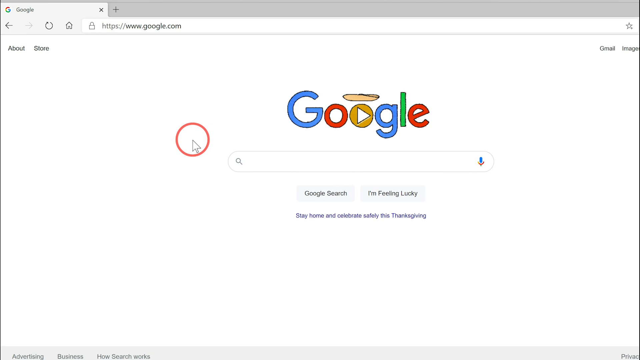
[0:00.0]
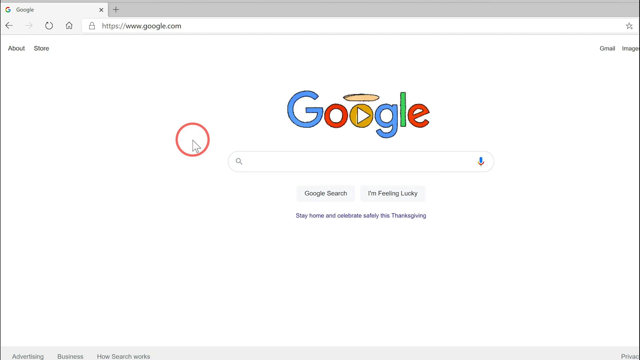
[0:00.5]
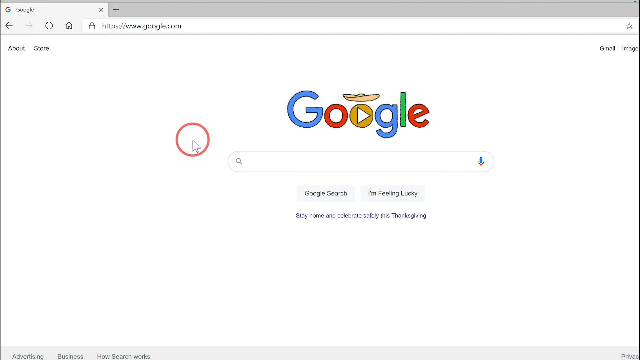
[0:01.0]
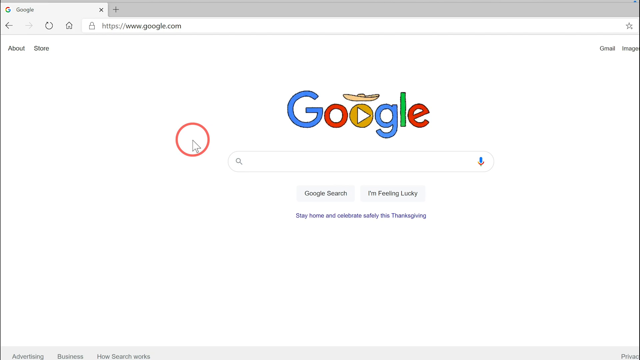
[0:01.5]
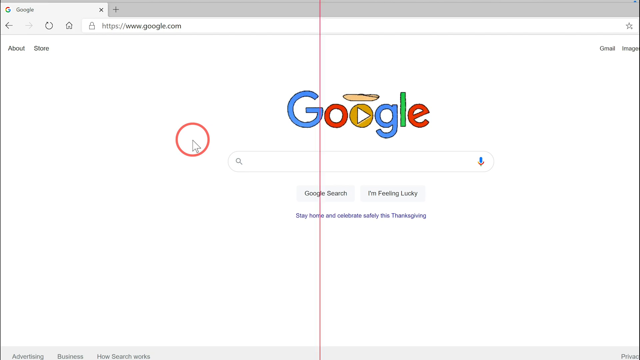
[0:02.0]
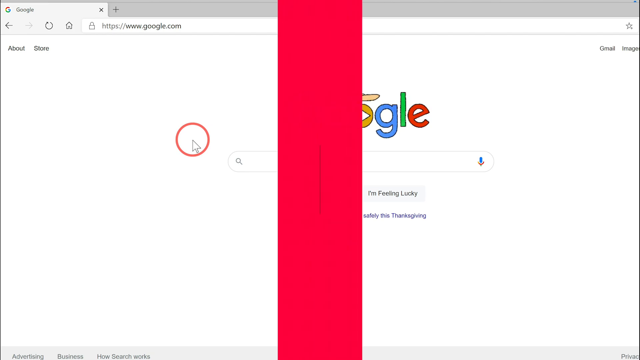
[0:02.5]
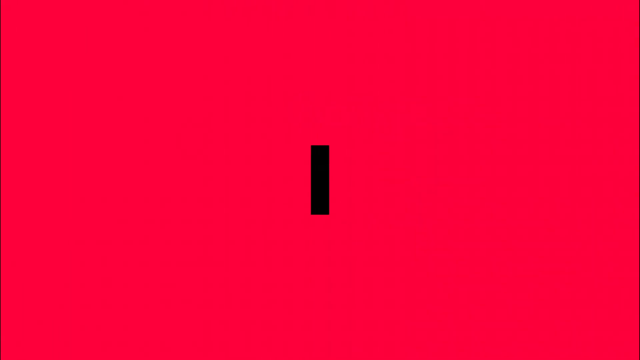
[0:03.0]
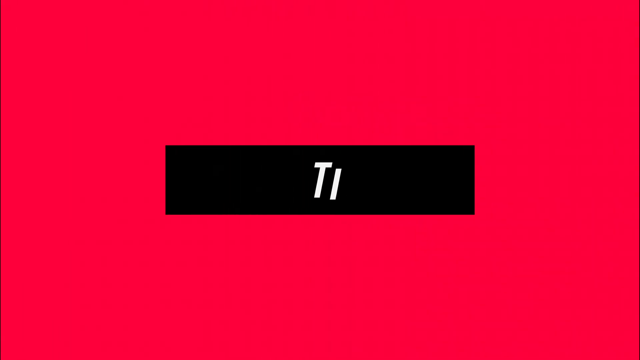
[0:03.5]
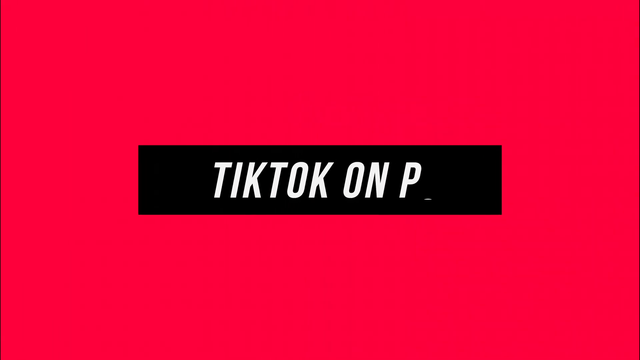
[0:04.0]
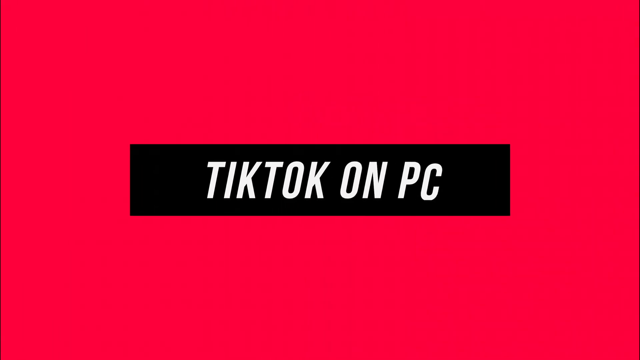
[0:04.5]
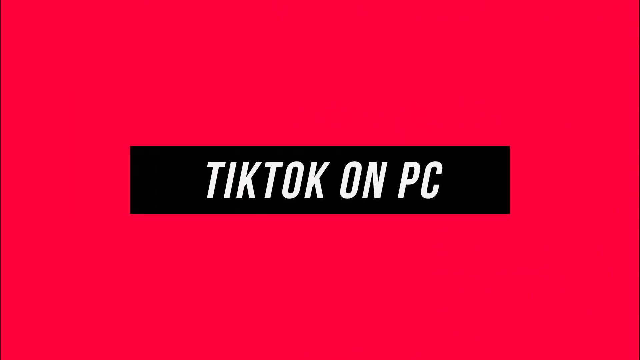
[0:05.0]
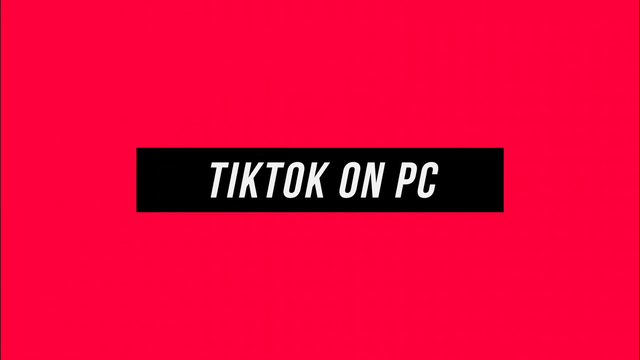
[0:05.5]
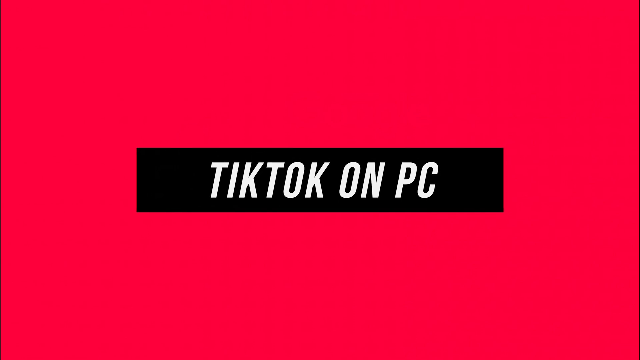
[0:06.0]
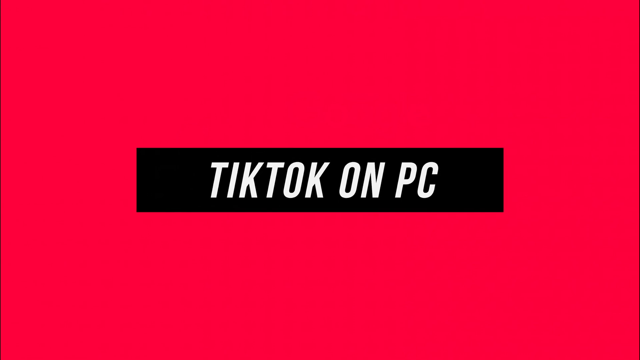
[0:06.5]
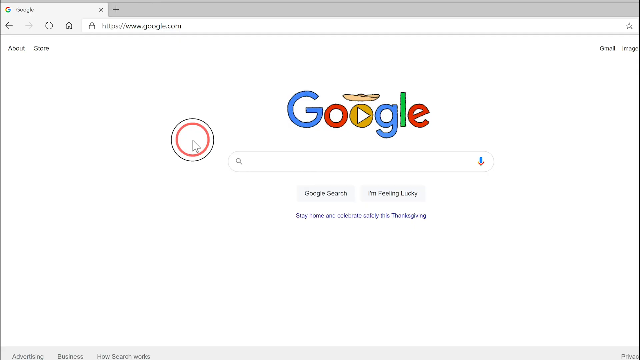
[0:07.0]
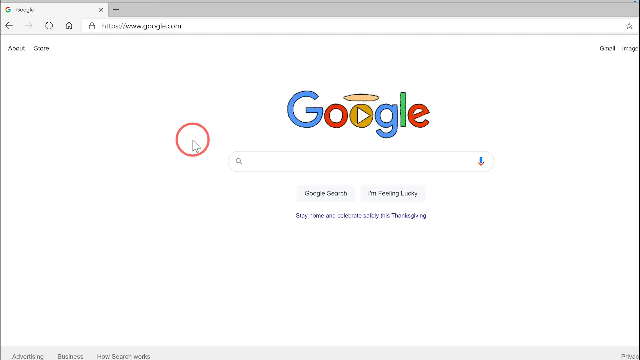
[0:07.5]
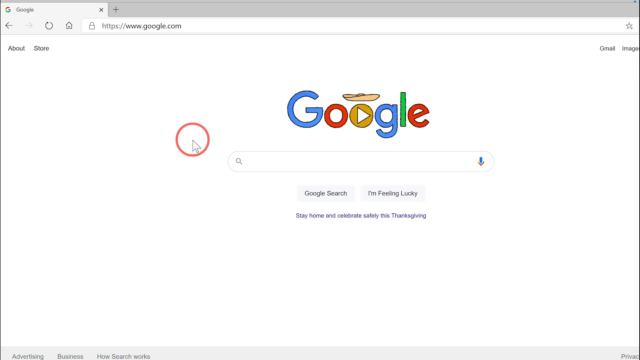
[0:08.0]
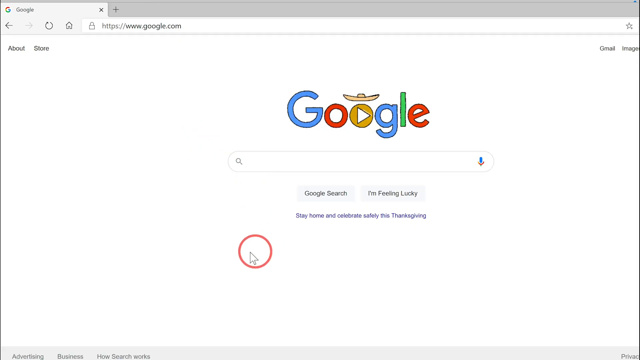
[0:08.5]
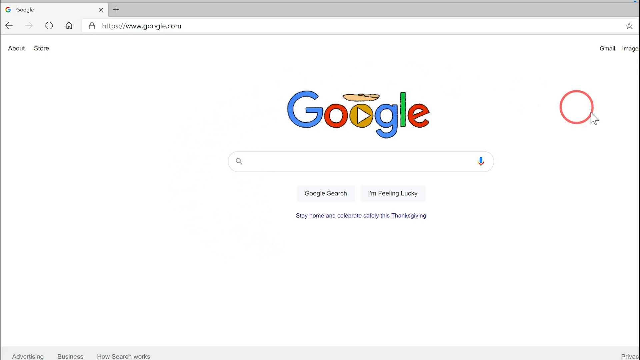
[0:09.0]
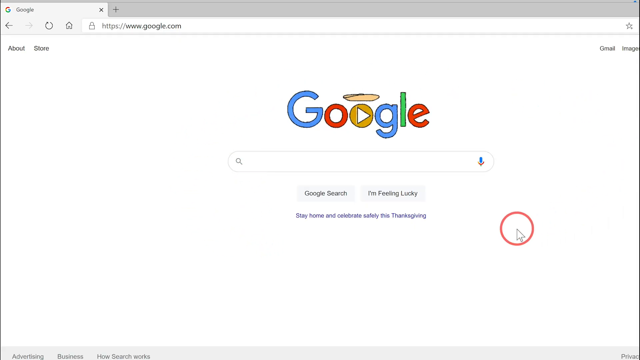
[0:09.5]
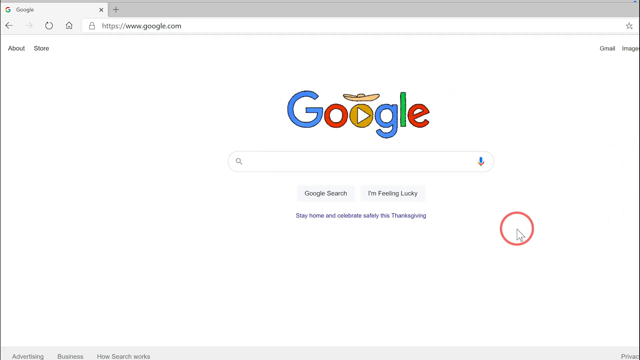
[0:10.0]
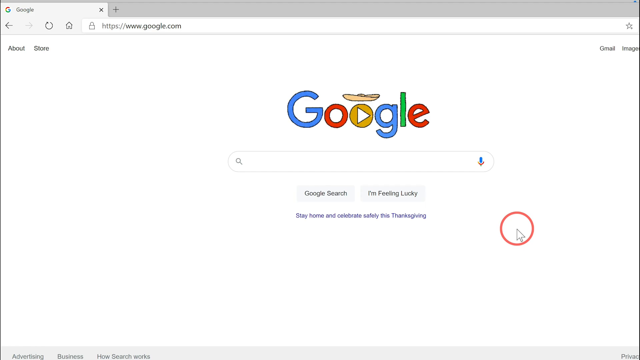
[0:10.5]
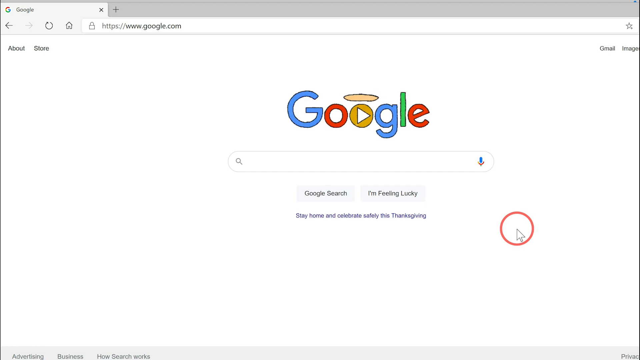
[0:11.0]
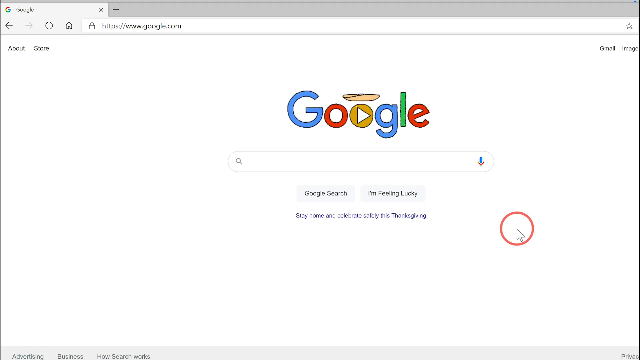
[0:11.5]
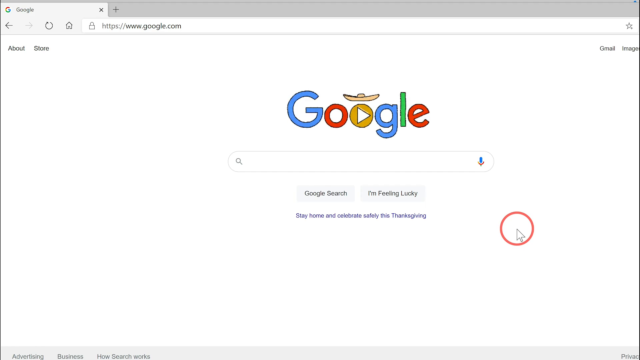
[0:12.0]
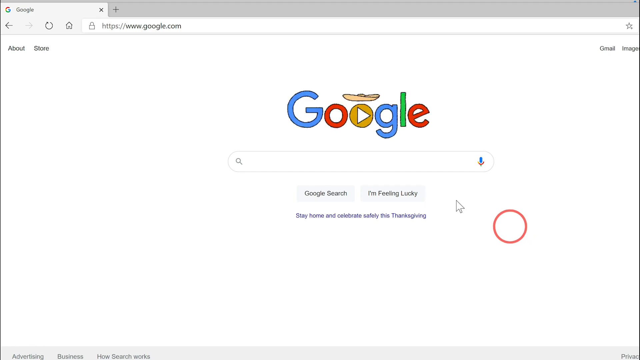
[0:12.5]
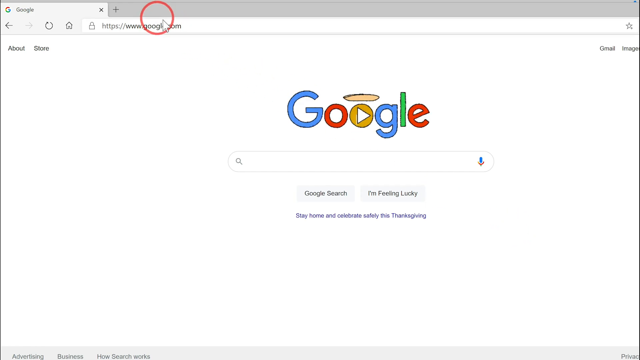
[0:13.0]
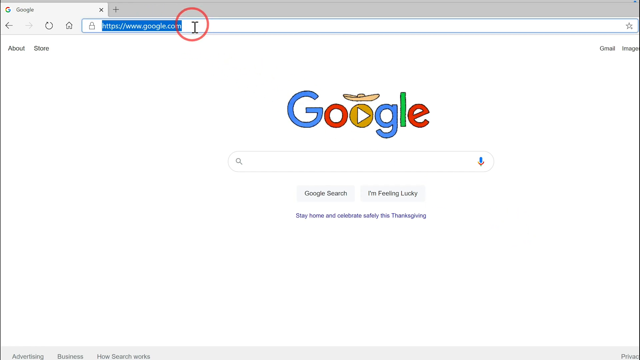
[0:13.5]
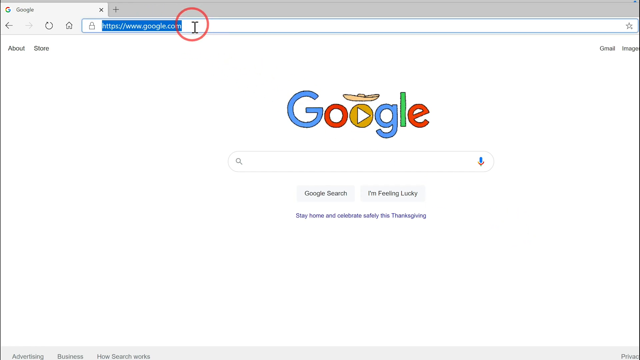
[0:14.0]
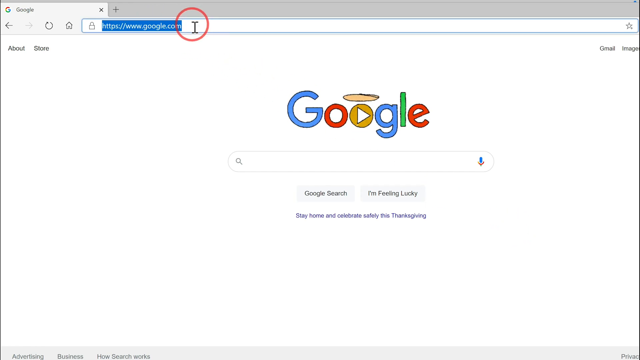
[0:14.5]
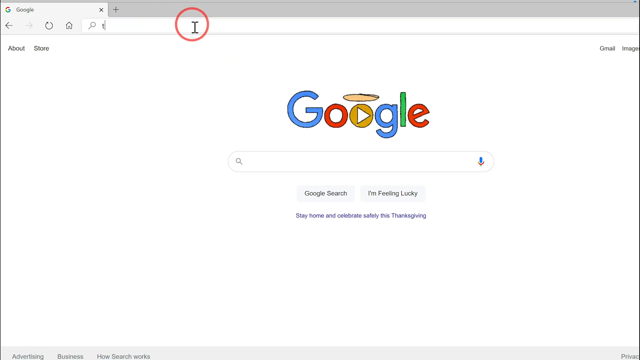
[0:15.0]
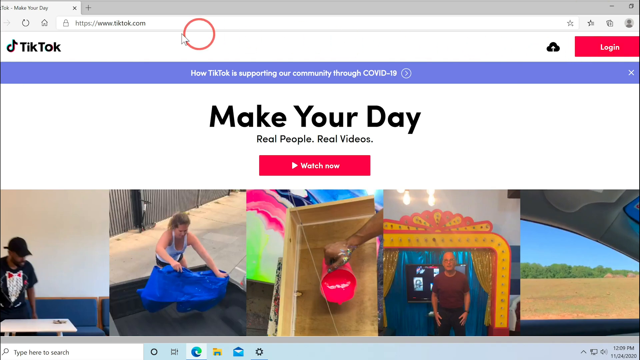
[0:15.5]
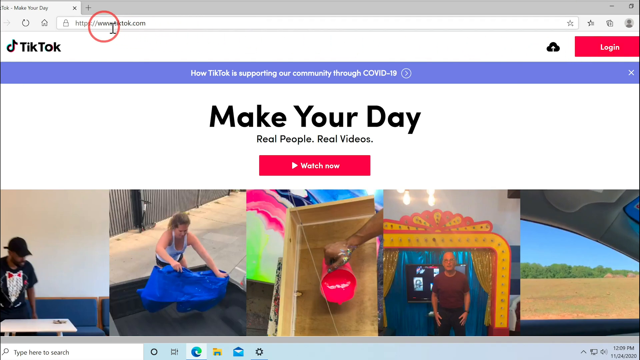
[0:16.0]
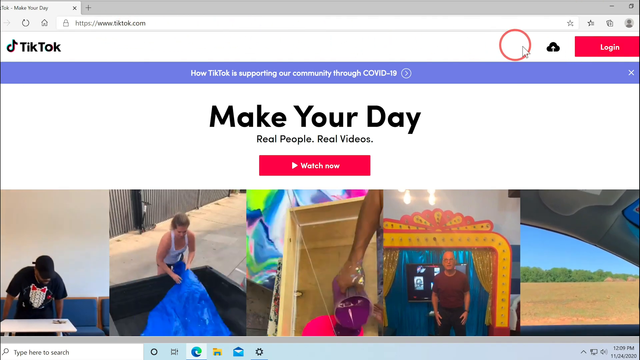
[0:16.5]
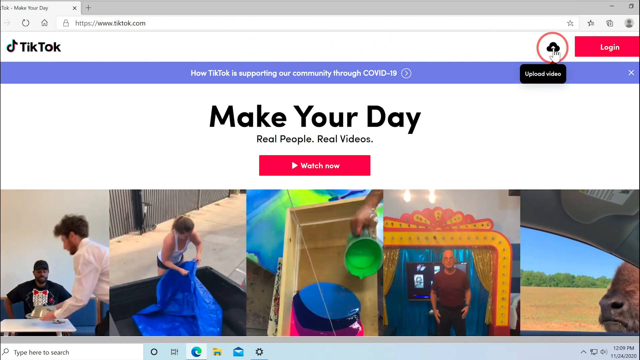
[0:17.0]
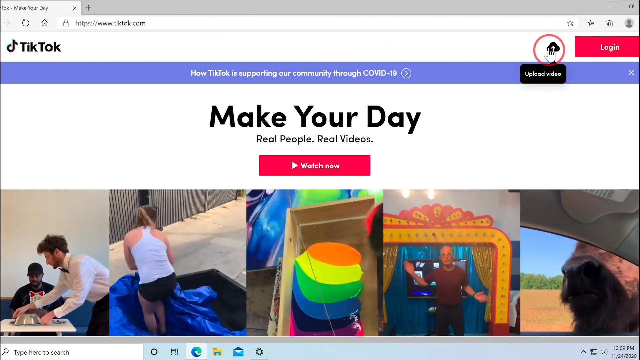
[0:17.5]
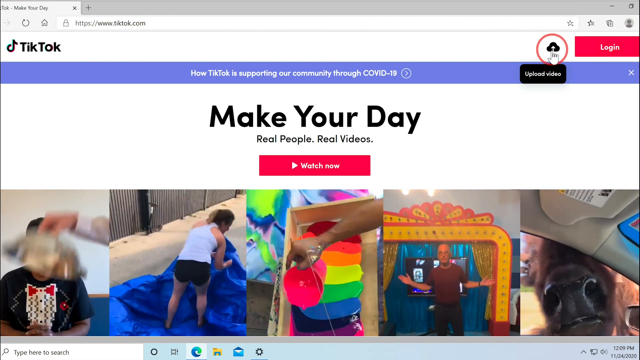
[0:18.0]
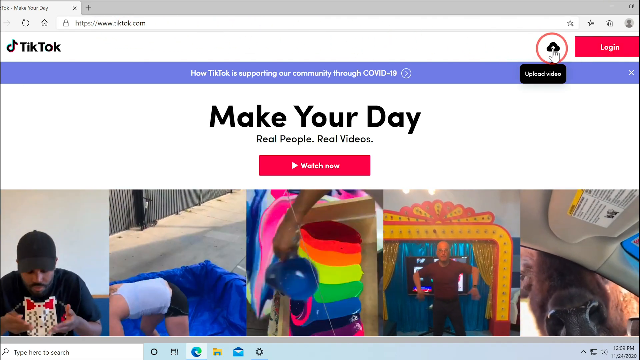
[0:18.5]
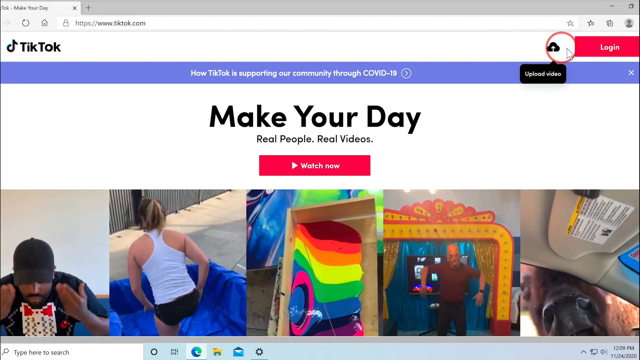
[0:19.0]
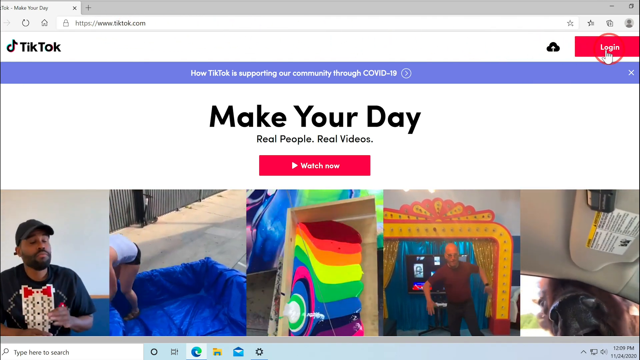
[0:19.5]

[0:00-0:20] A white page shows "Google" on it, with the mouse icon over to the left and a red circle around it. The view switches to a pink page that just says "tick tock on PC" with a black rectangle, then returns to the Google page, where the mouse moves around over the white page, goes up to the icon and clicks on it; a red square appears around it. The view then returns to the white page with Google on it. The sequence is very quick, lasting just a couple of seconds. The Google logo looks unusual: it has something like a halo over the start button in the middle and a gold circle; the G's are both blue, the L is green, and the O and E are red. Then text reads "make your day real people, real videos", with something like five videos shown.